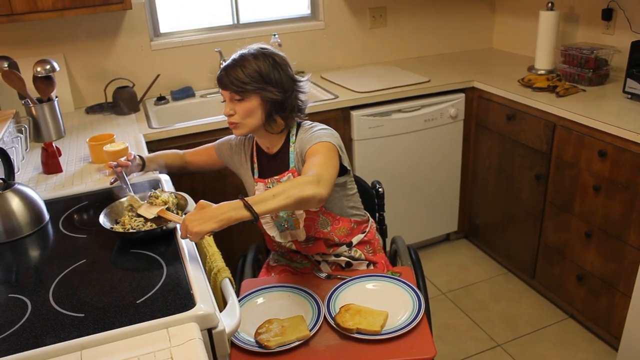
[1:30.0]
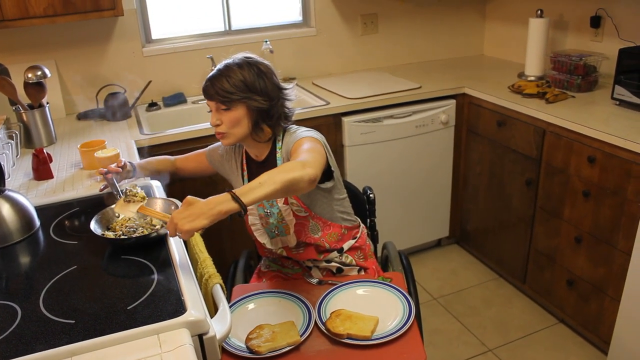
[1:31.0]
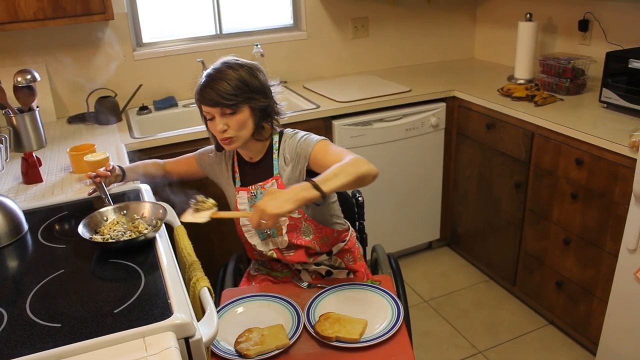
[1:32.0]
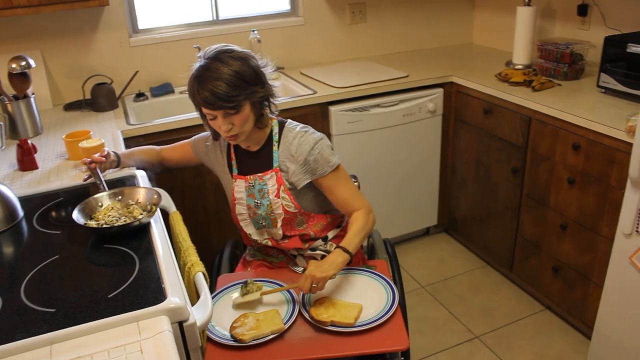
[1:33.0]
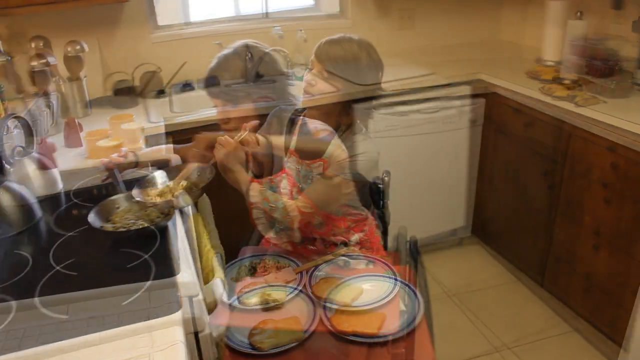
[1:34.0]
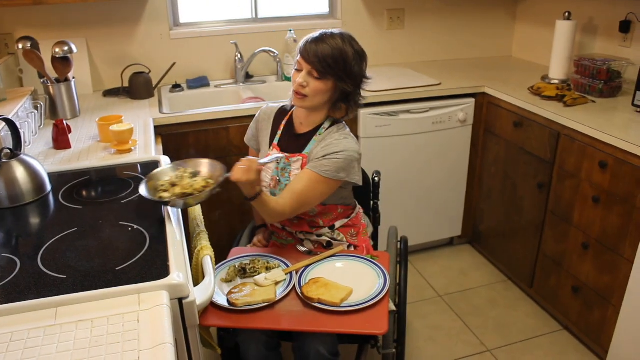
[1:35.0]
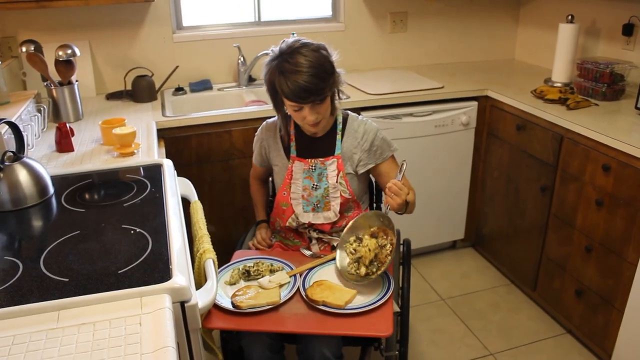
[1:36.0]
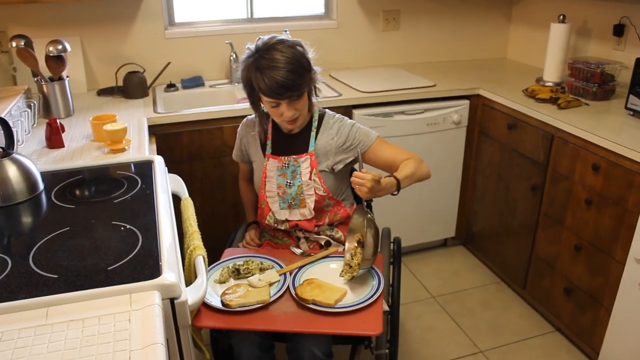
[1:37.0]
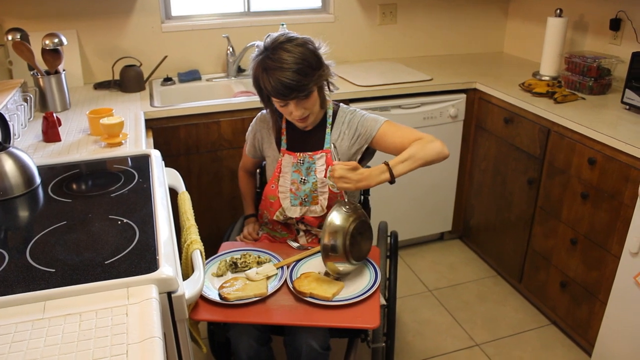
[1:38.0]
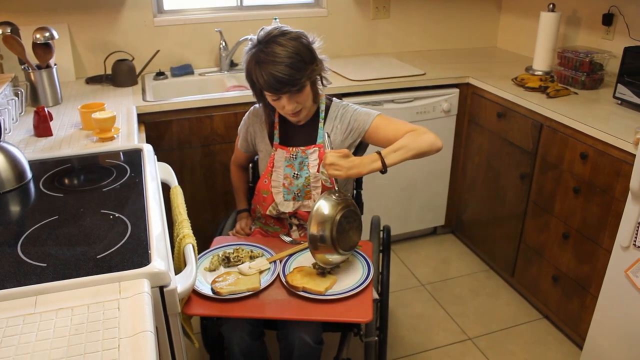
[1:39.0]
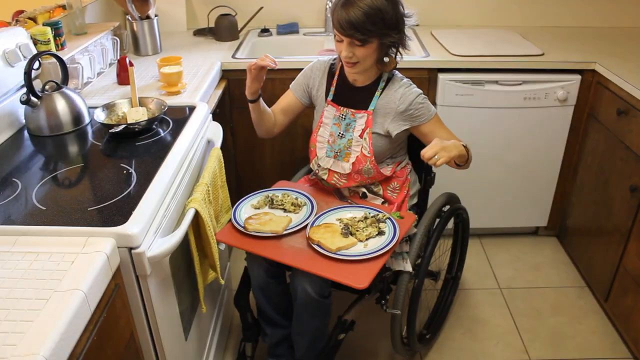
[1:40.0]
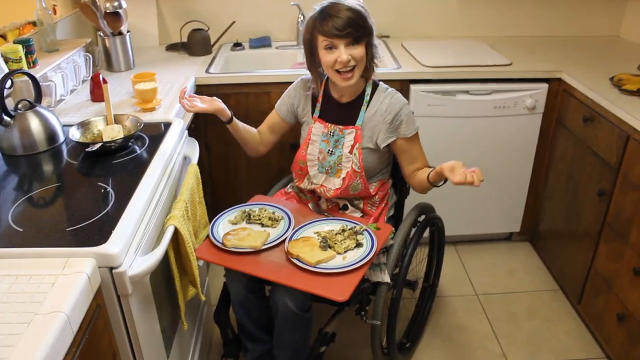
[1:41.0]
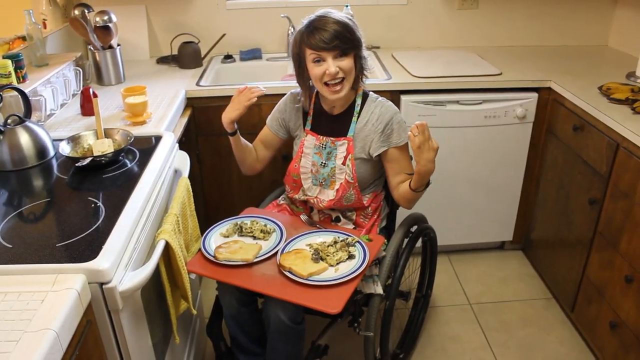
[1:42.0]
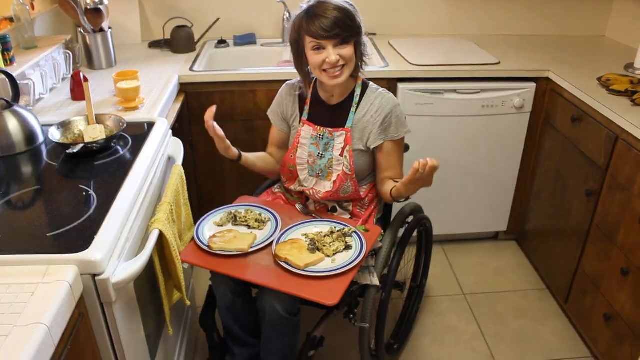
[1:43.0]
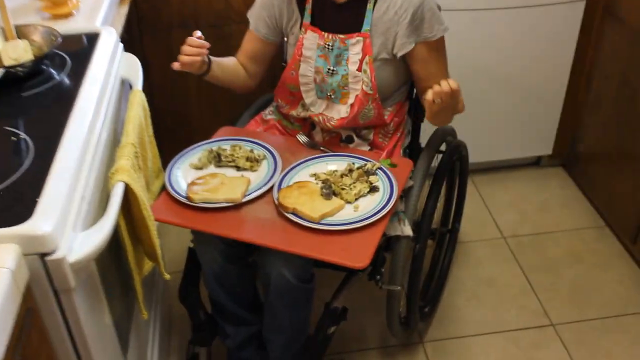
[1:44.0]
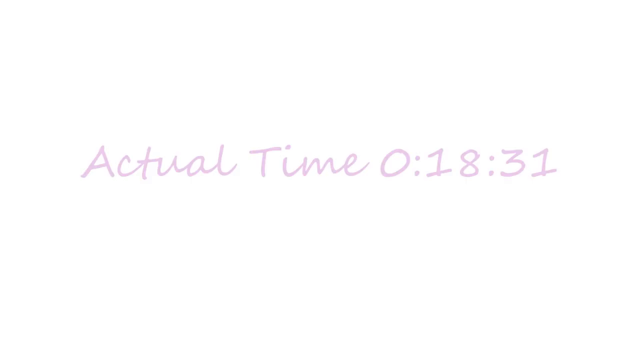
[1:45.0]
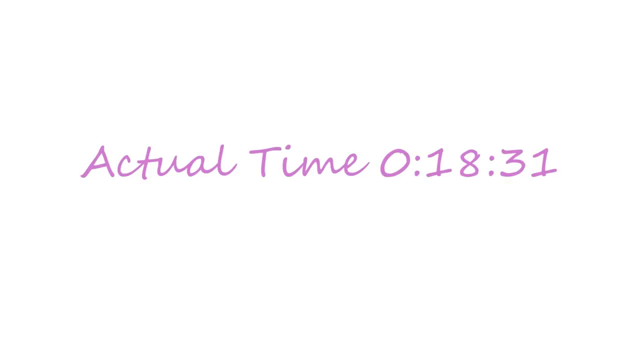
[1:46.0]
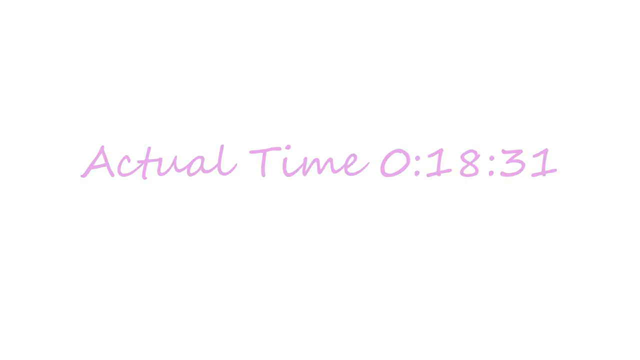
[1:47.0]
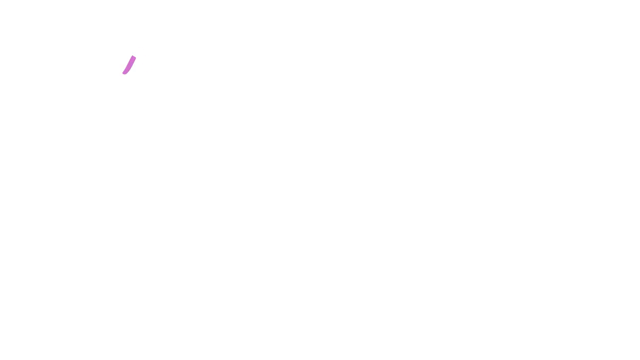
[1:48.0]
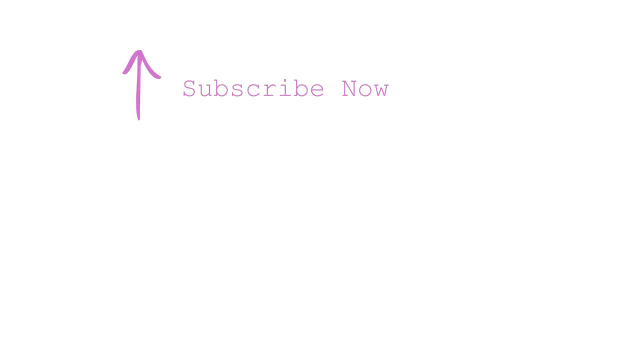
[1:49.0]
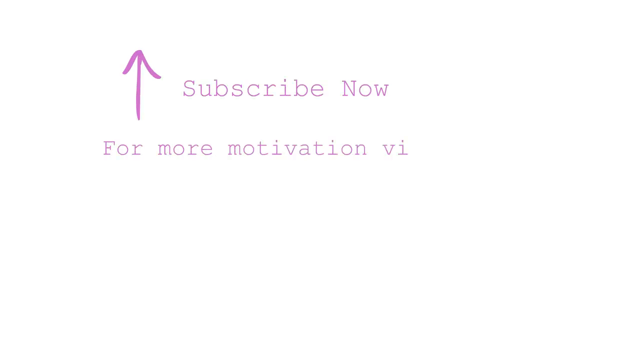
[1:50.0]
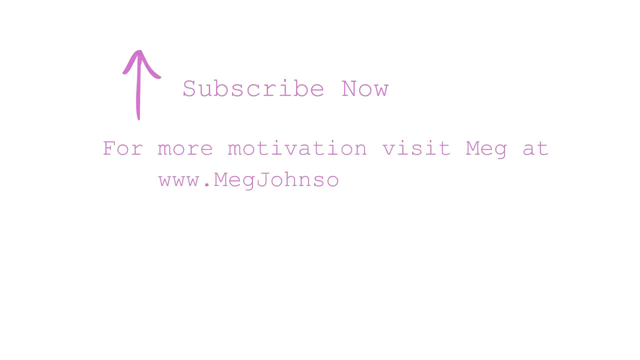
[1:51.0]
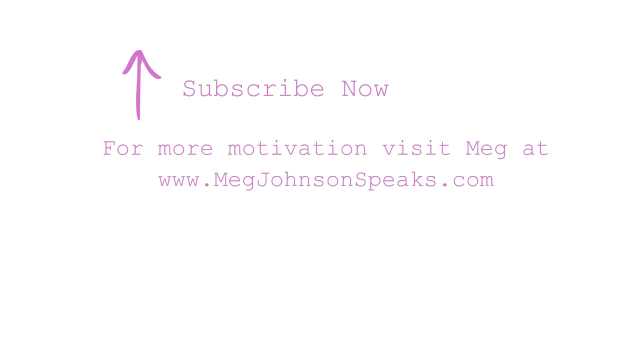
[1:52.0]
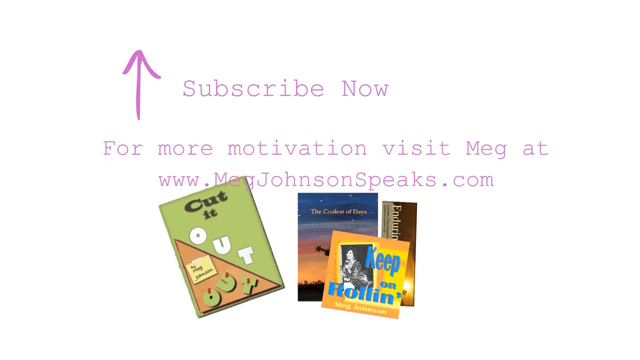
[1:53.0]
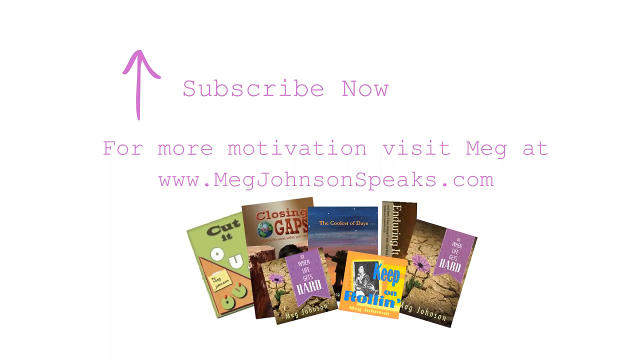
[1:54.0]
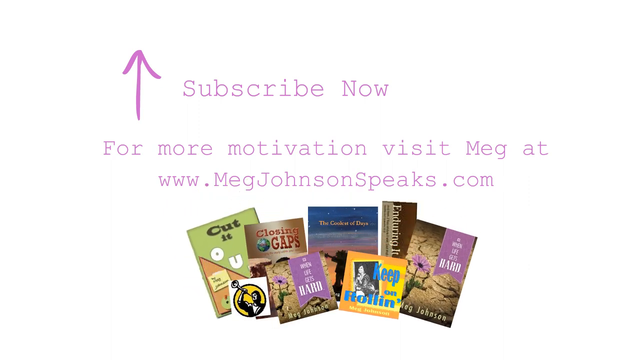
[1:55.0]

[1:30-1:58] The woman takes egg out with her spatula, with two plates on the cutting board on her lap, slowly scooping egg onto the plates. The video transitions to her in the same position in the kitchen, where she grabs the stainless steel pan and pours egg onto both plates. There also looks to be a piece of toast on each plate. She keeps talking to the camera, then laughs, and the video zooms into the food. It then transitions to an all-white background with pink text reading "actual time," showing 18 minutes and 31 seconds. That text goes away, and her subscribe, like and comment information appears in pink text: "subscribe now. For more motivation, visit Meg at www.megjohnsonspeaks.com," along with a pink arrow and little pop-ups of pictures.